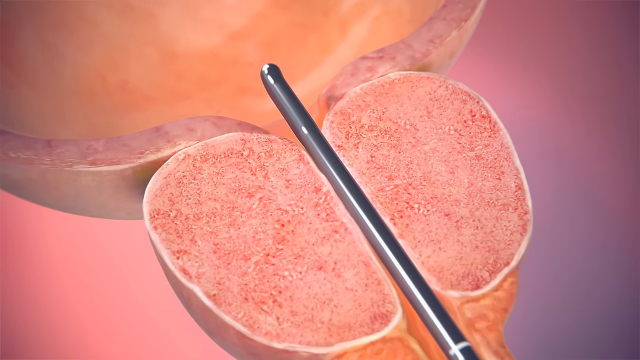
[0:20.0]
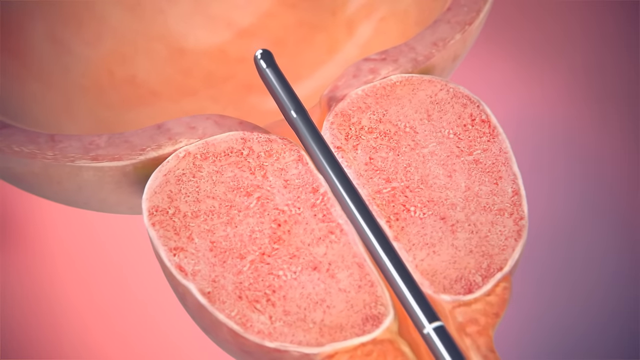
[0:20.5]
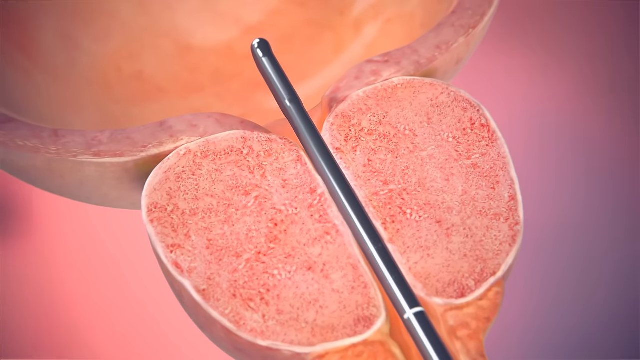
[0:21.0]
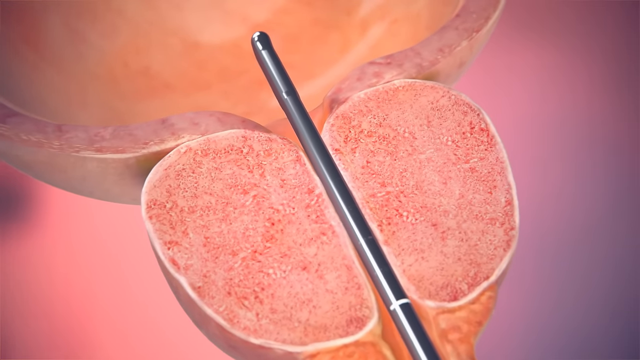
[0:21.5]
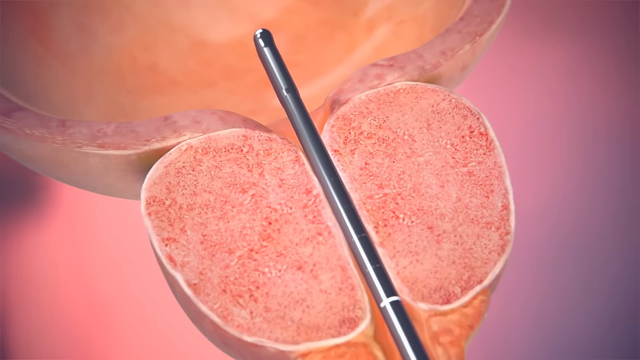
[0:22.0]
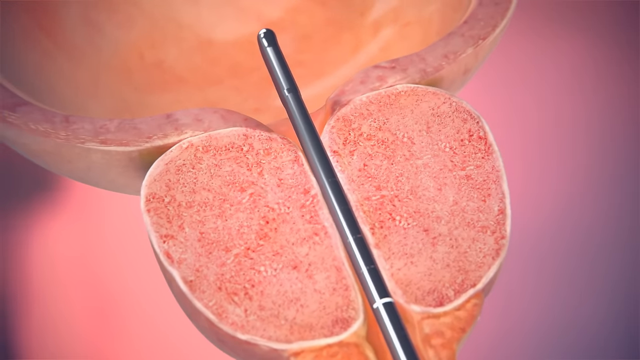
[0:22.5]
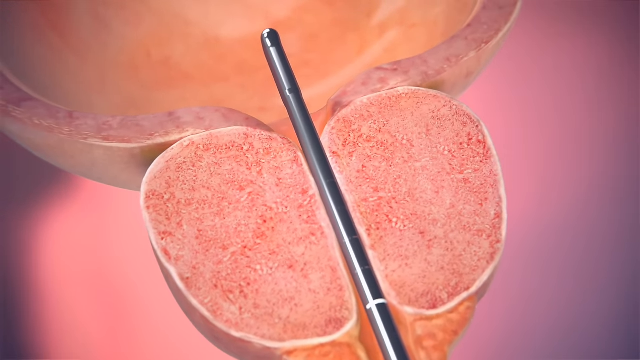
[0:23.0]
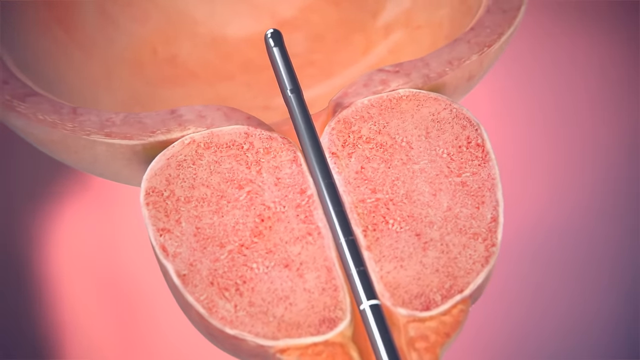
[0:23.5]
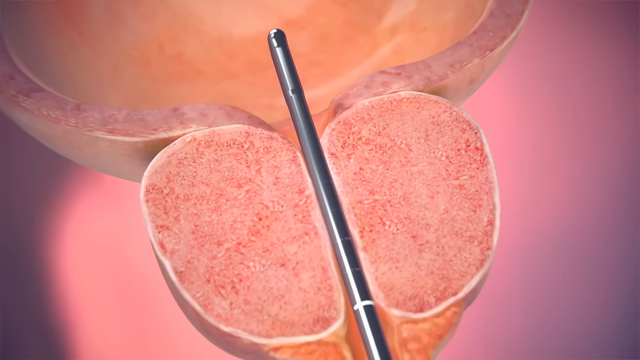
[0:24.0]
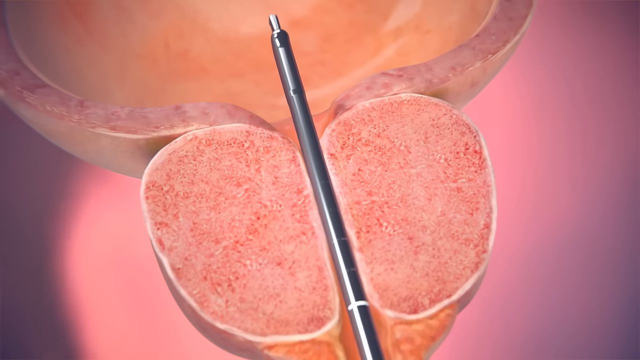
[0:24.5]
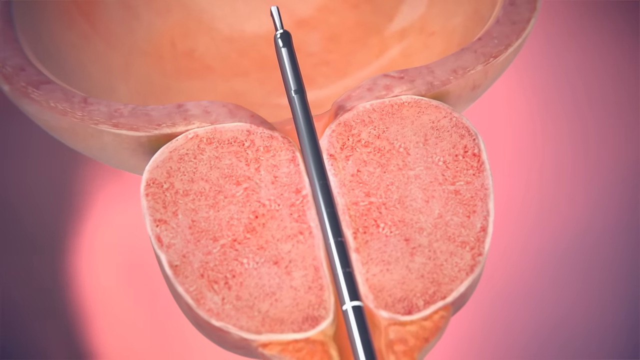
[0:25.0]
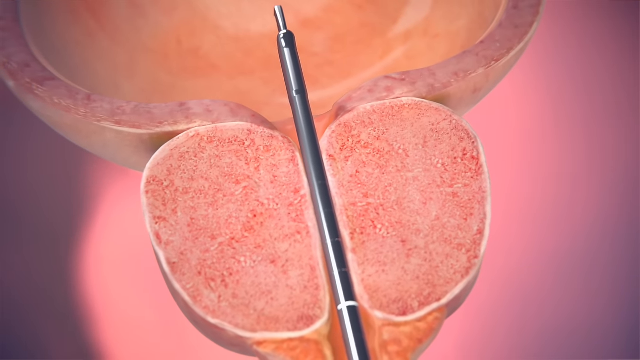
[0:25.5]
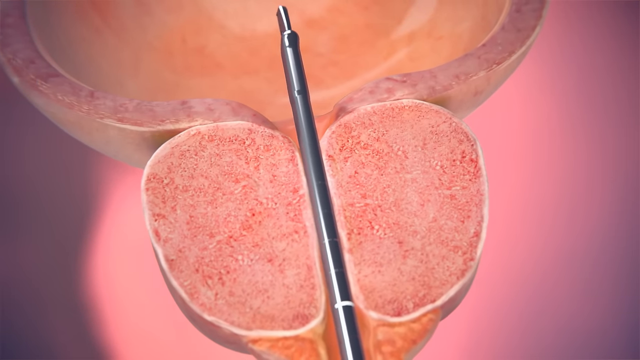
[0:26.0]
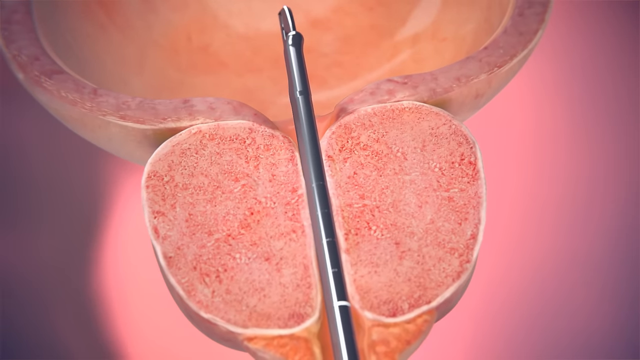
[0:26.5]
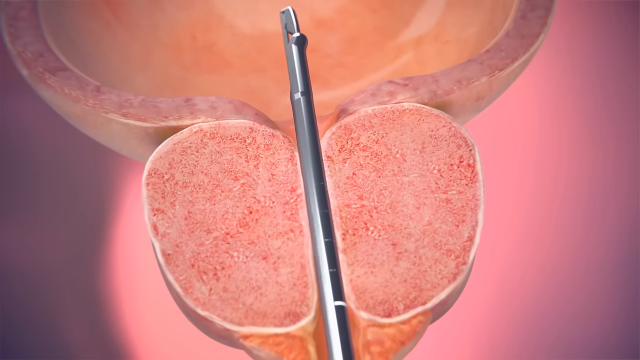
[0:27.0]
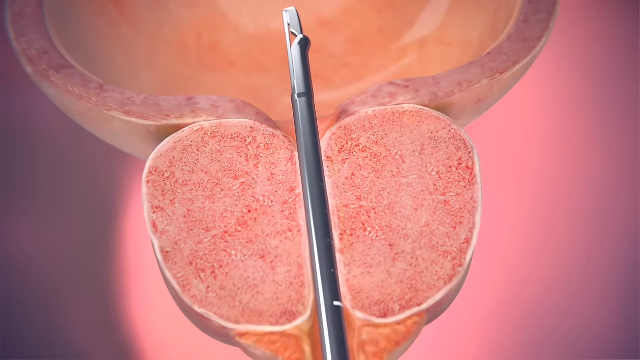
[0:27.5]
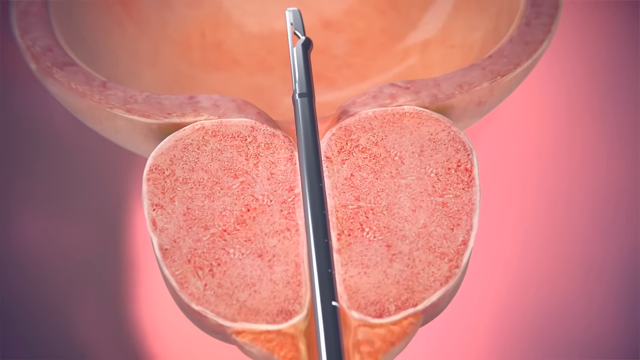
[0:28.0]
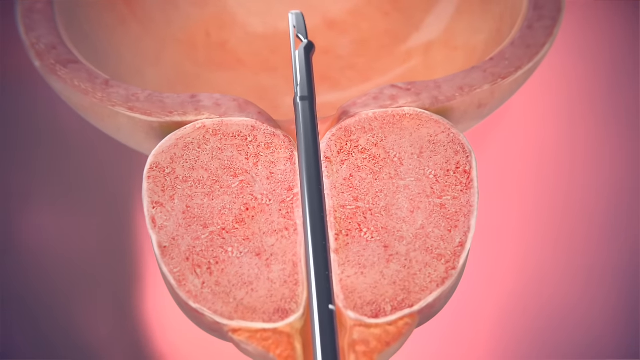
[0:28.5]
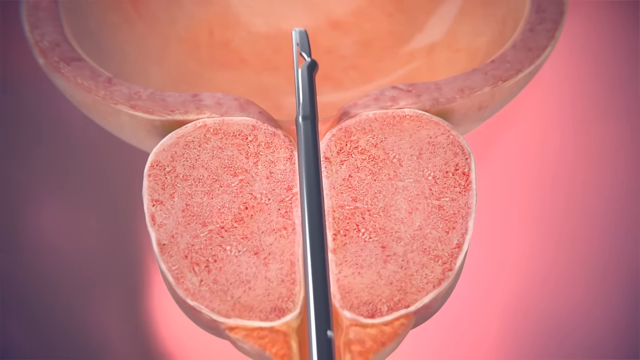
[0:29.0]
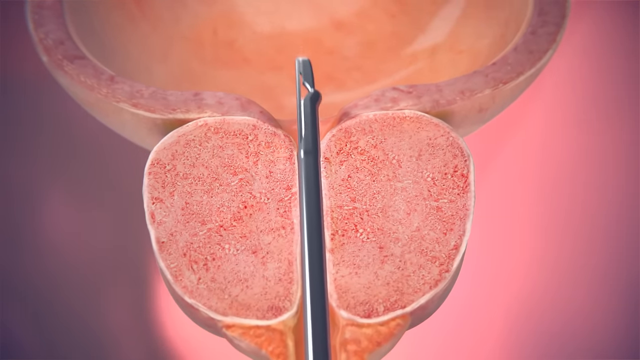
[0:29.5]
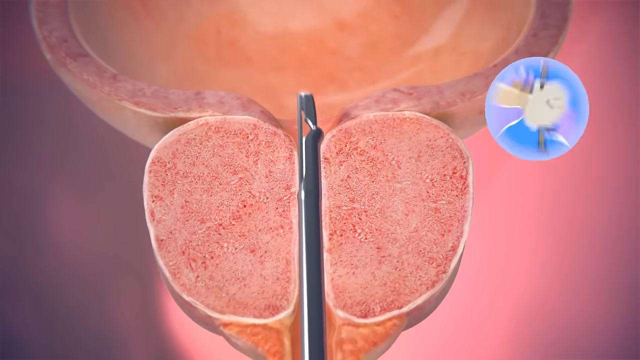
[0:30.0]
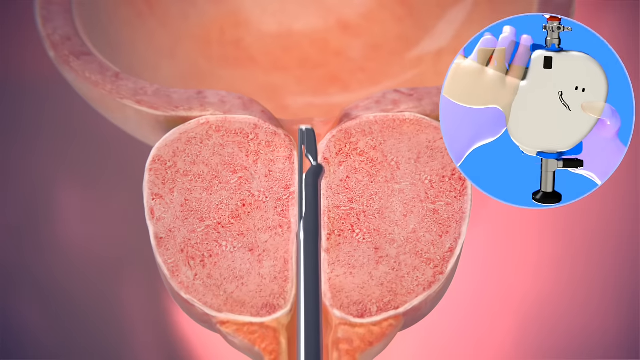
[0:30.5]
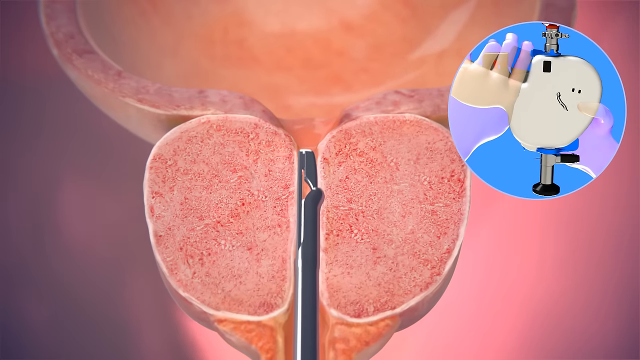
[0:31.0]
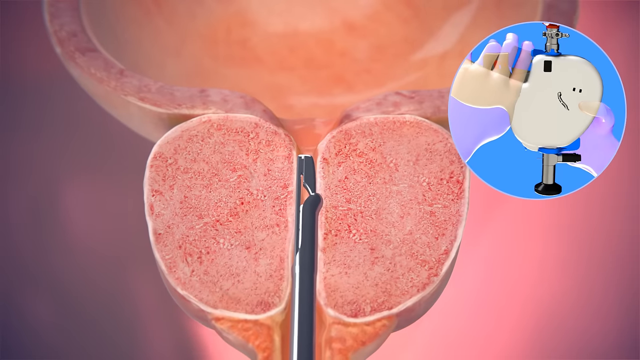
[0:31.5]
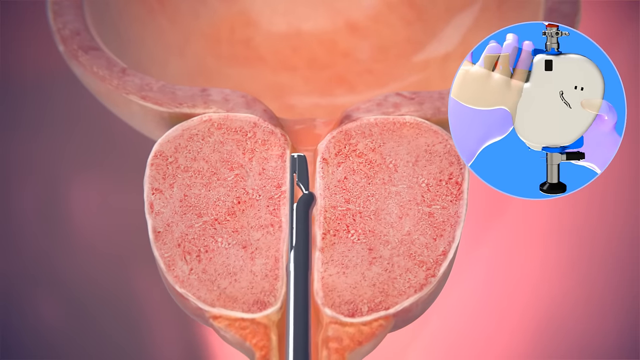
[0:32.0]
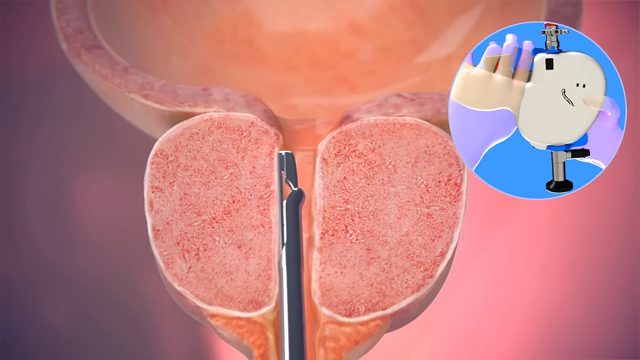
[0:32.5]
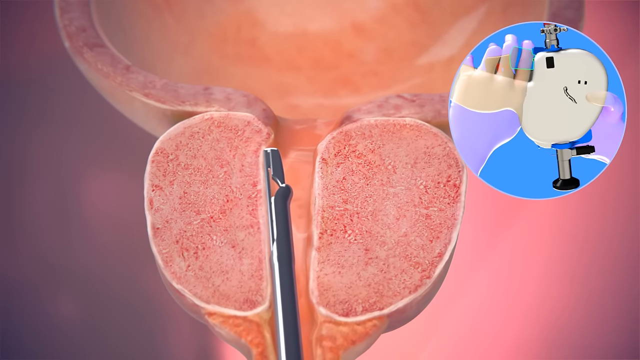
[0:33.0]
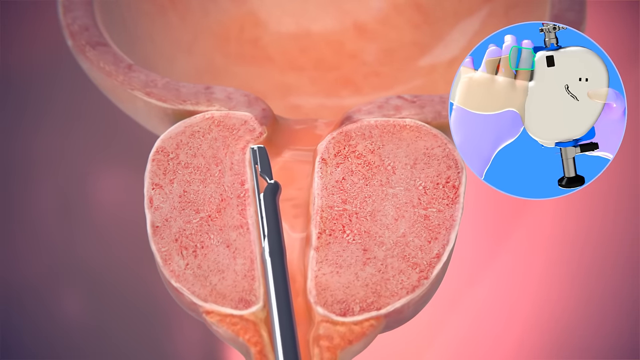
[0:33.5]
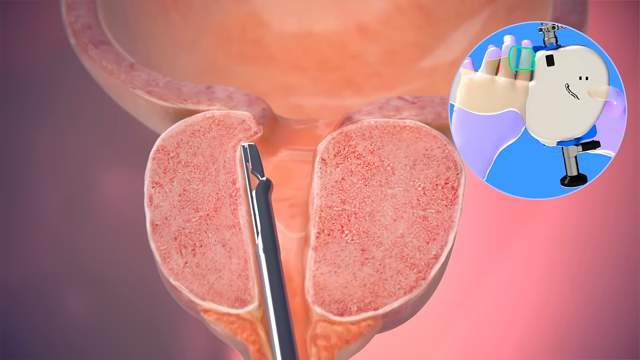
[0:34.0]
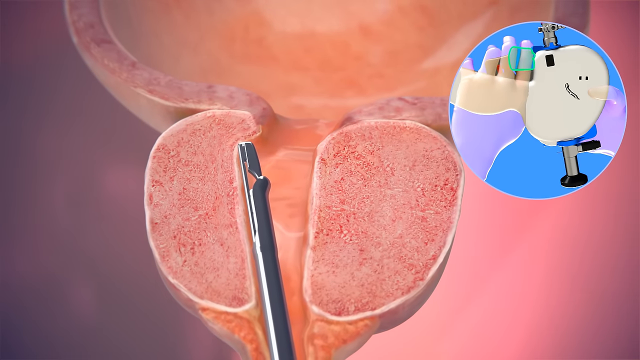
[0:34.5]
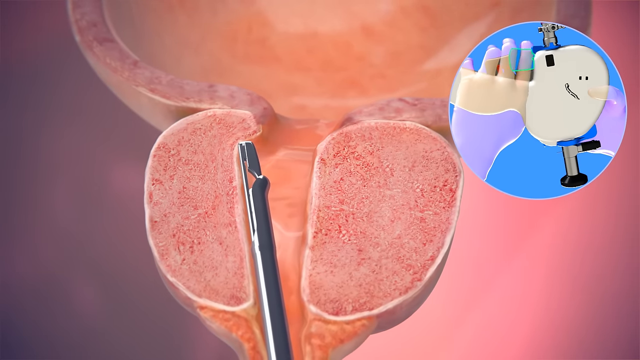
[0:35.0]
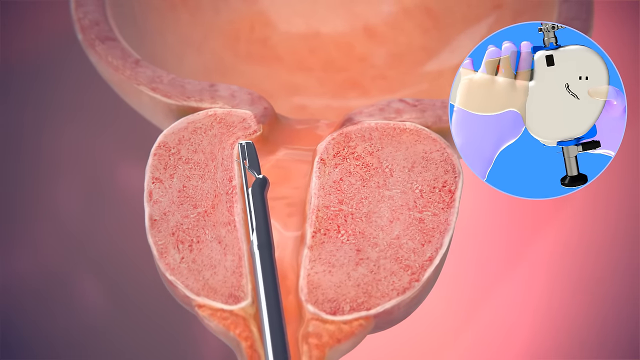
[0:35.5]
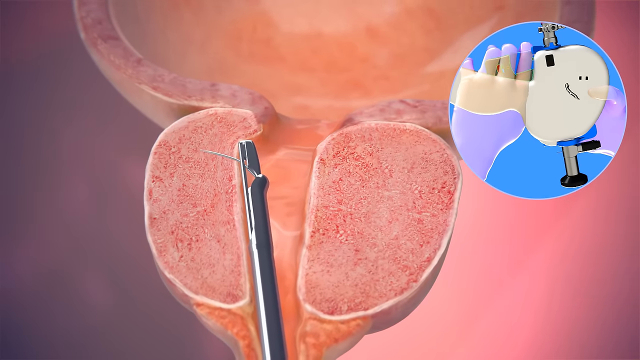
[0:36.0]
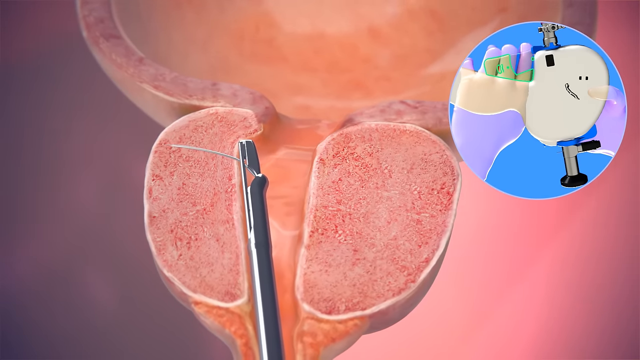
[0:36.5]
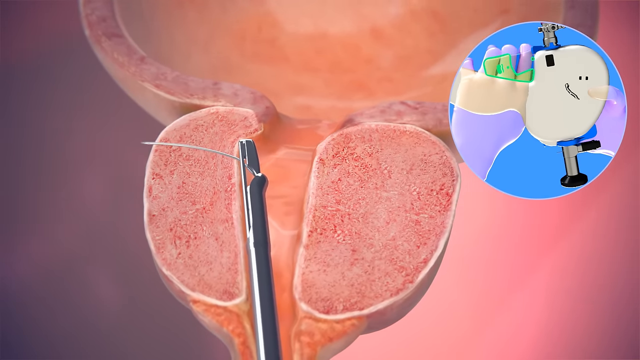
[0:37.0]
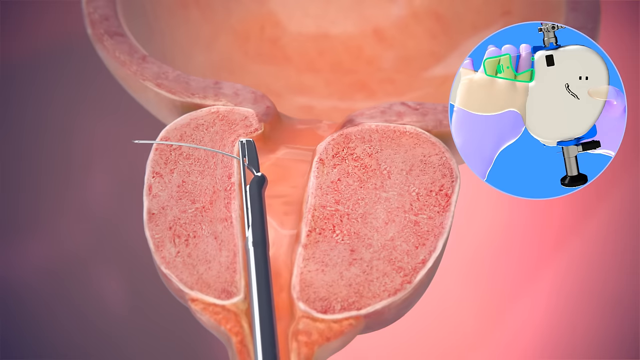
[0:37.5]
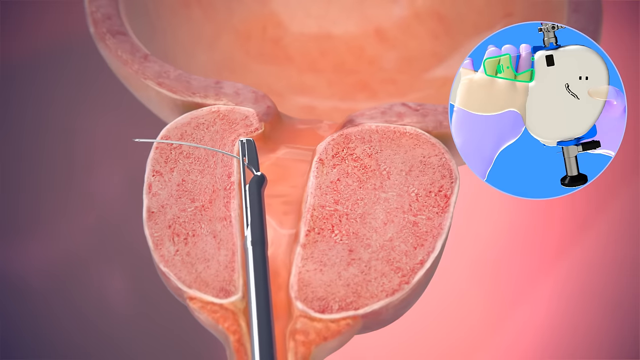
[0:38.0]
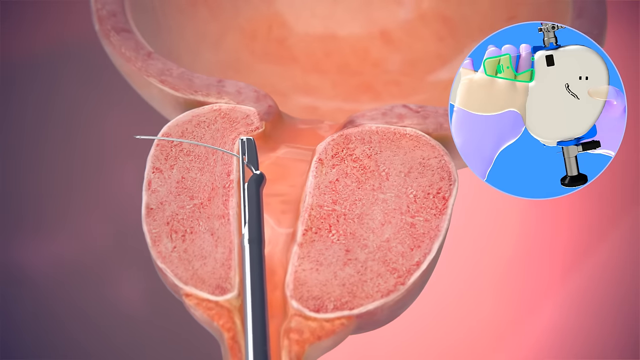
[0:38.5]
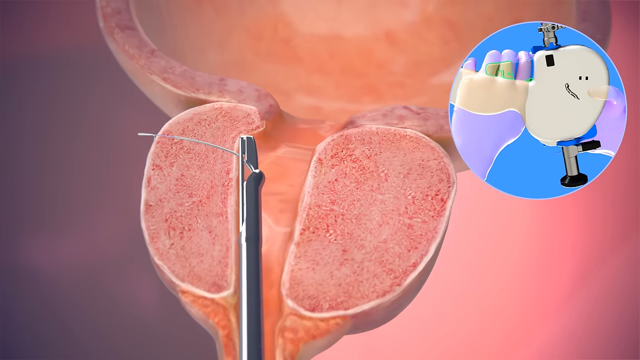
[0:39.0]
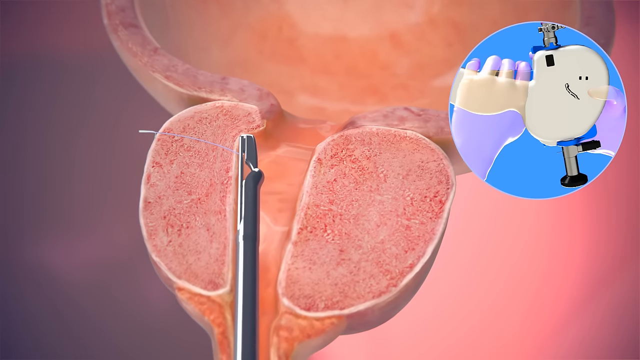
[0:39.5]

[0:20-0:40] An animated illustration shows a sliced-open bladder and urethra with a swollen prostate gland. A slim metal rod, a medical device, is inserted through the urethra into the bladder, with its tip just entering the bladder. Another protrusion, like a slimmer or smaller metal rod, comes out through the tip of the device. The device is then withdrawn slightly and used to push to the sides, creating a larger opening between the swollen prostate gland. The image is mostly in shades of pink and peach, and the device is metallic grey. The orientation of the prostate and bladder gradually shifts in angle, as if the camera angle is turning, moving the image in a clockwise direction. A circular pop-up illustrates the hand holding the device; the hands seem to be wearing purple gloves. There is also what looks like a white circular form with two dots for eyes and what looks like a smile, representing the prostate itself, with the metal medical device inserted within it.